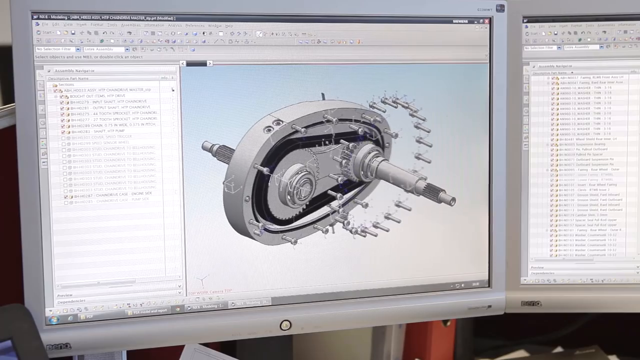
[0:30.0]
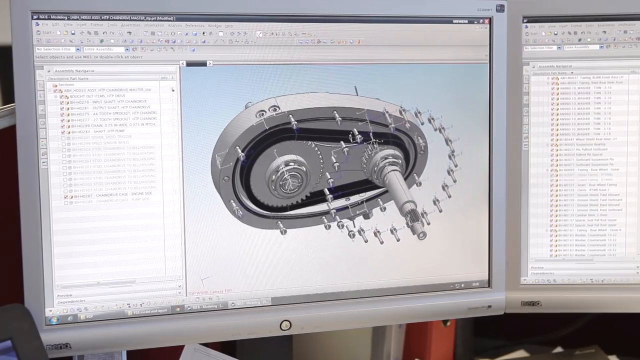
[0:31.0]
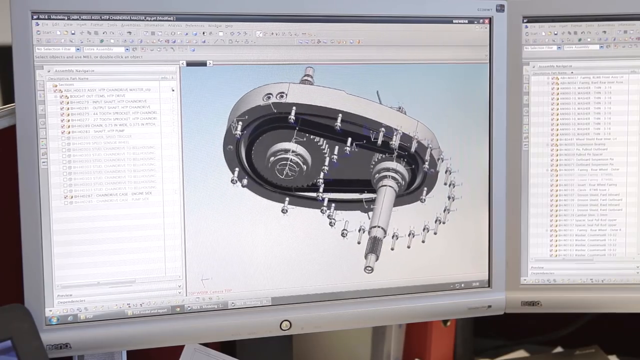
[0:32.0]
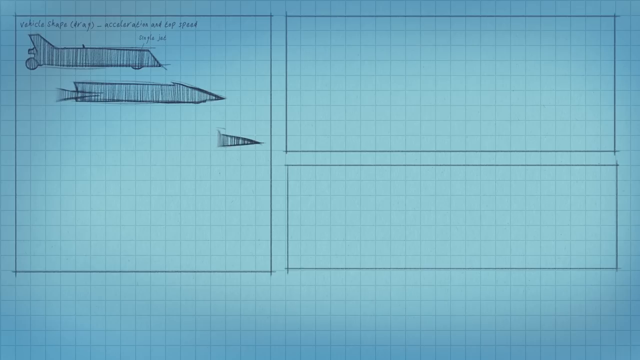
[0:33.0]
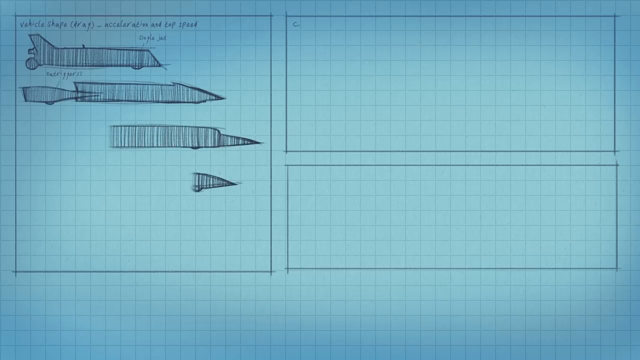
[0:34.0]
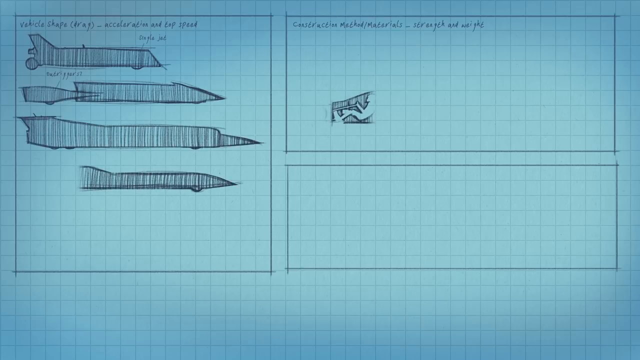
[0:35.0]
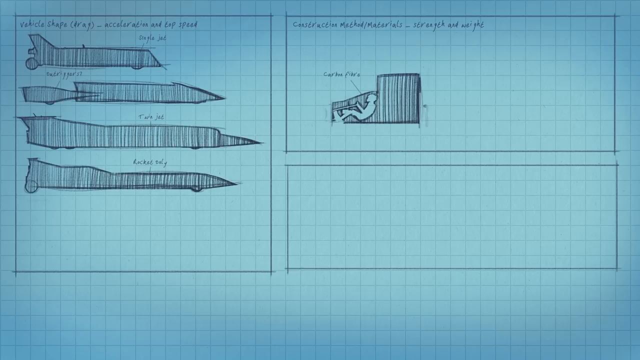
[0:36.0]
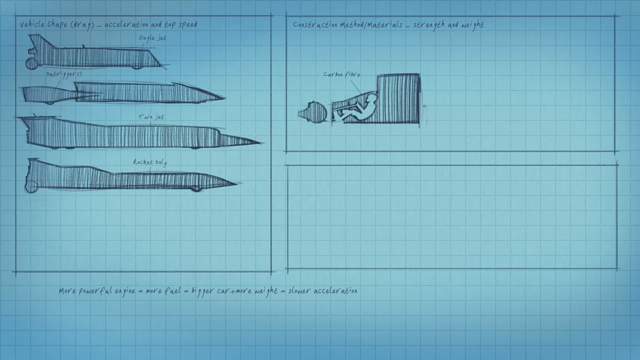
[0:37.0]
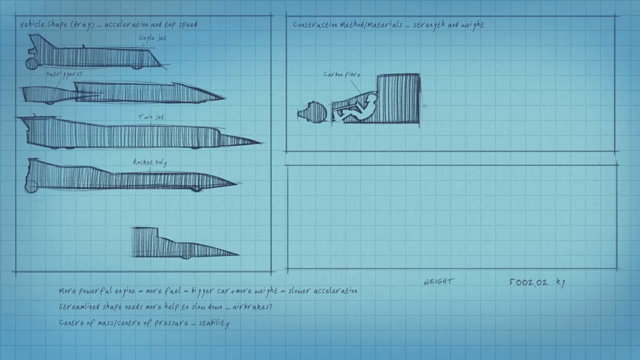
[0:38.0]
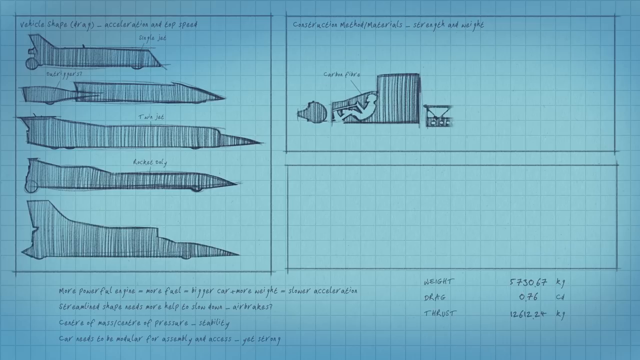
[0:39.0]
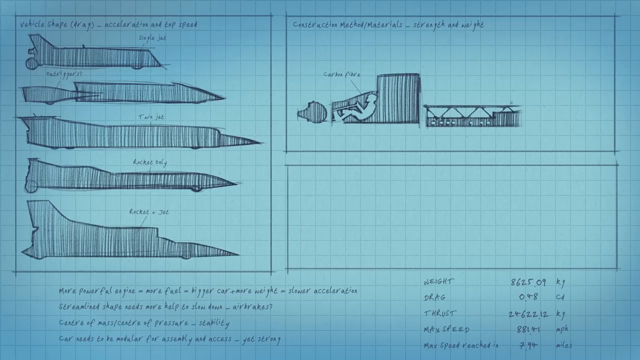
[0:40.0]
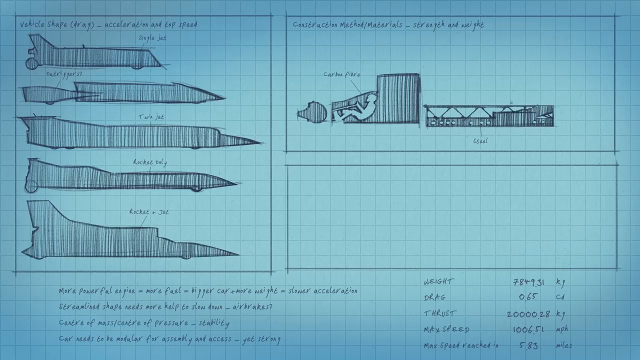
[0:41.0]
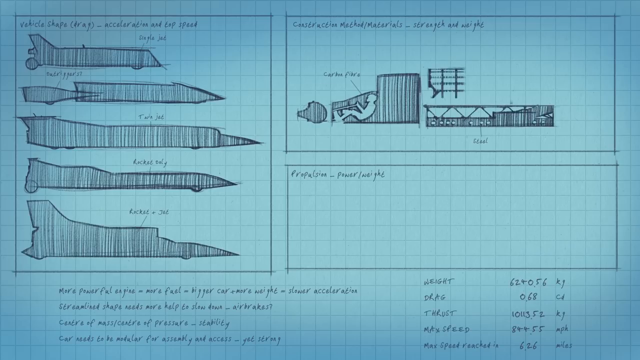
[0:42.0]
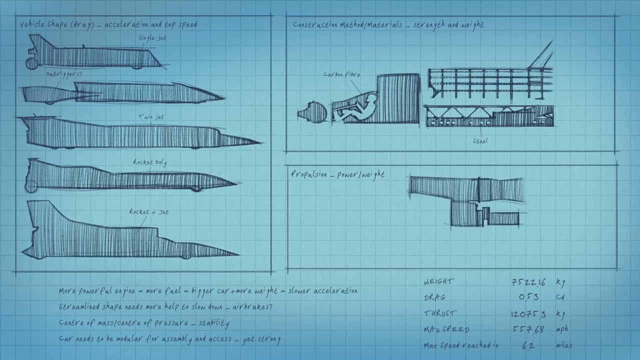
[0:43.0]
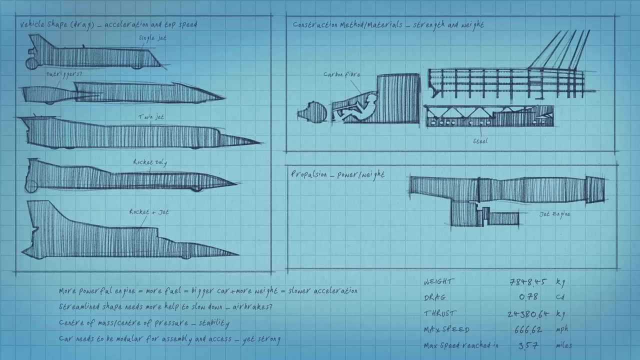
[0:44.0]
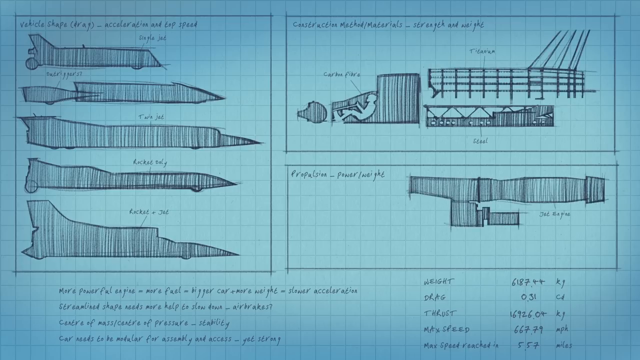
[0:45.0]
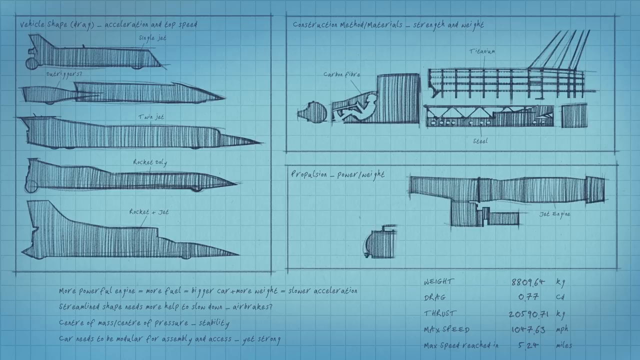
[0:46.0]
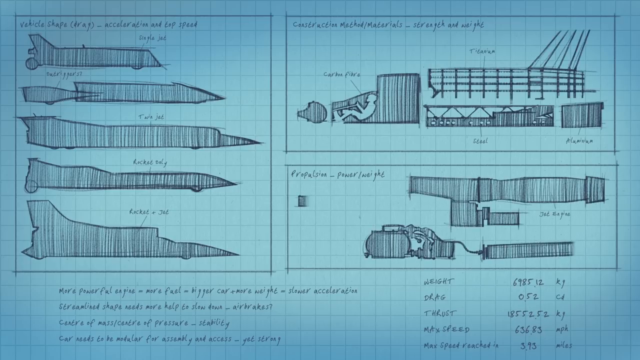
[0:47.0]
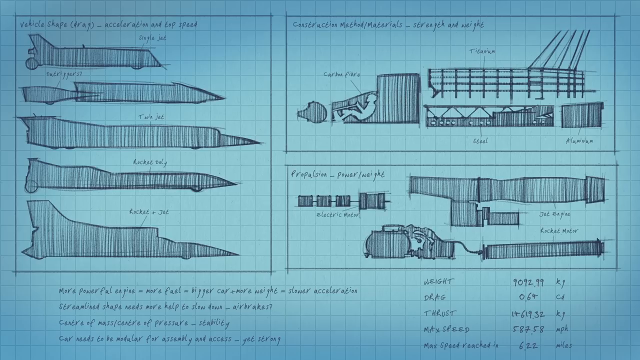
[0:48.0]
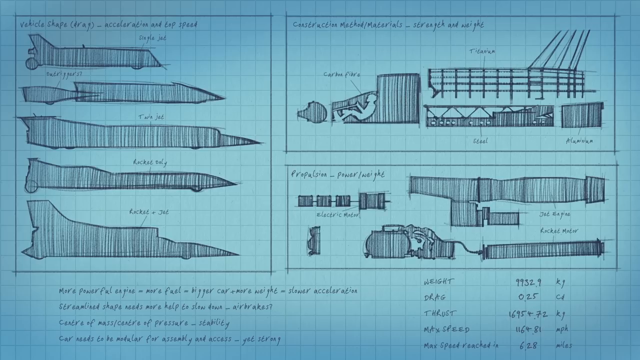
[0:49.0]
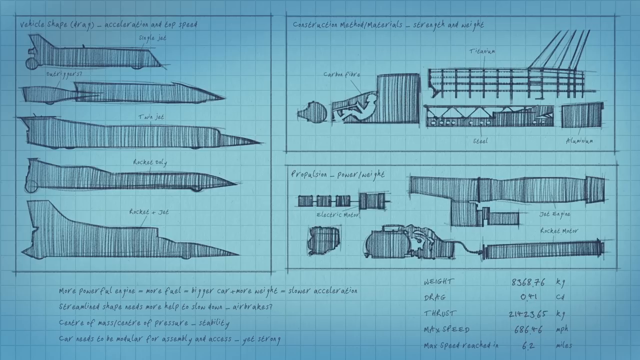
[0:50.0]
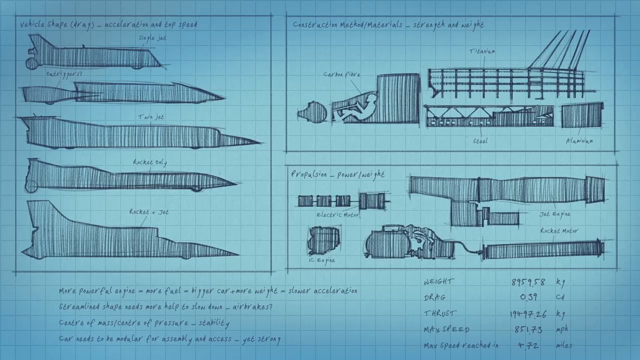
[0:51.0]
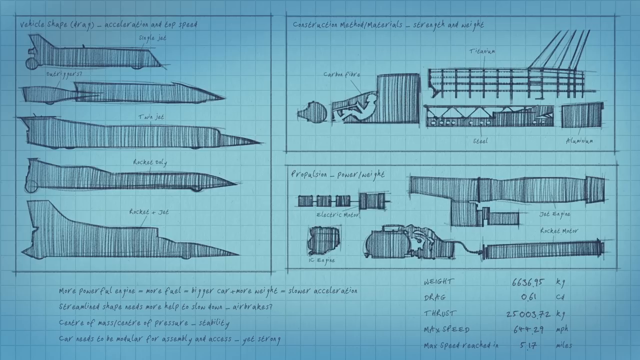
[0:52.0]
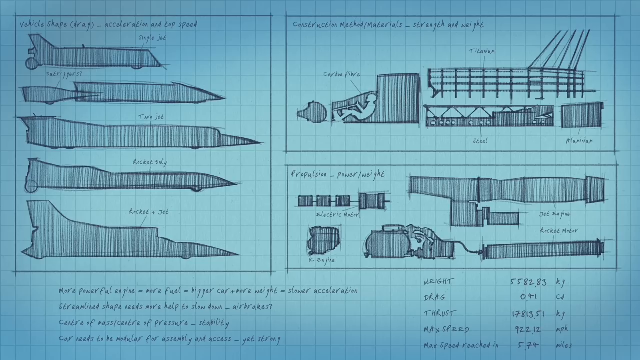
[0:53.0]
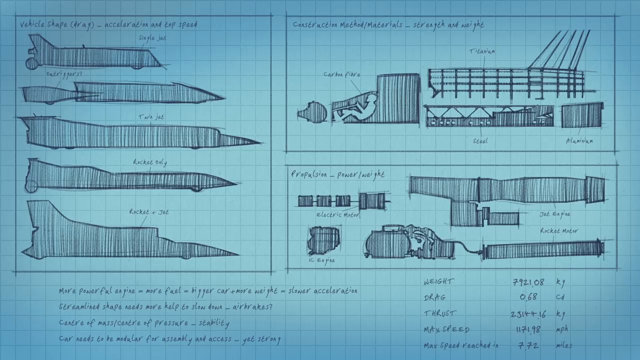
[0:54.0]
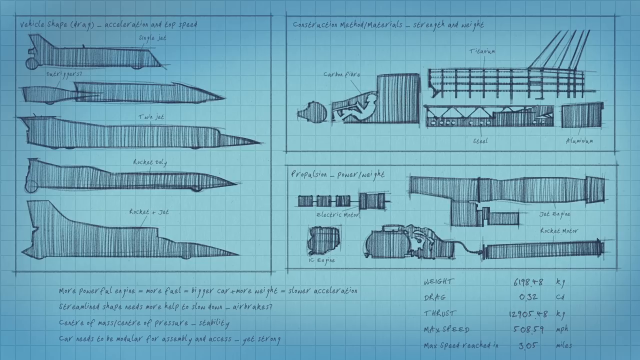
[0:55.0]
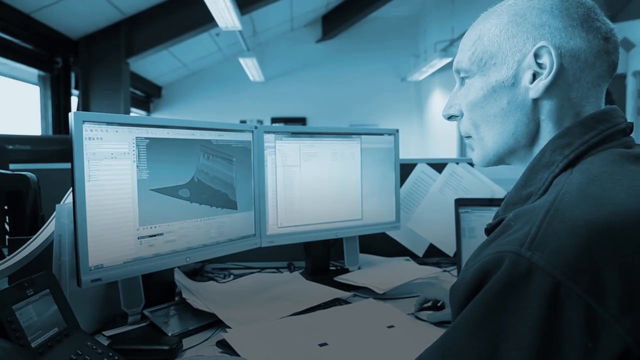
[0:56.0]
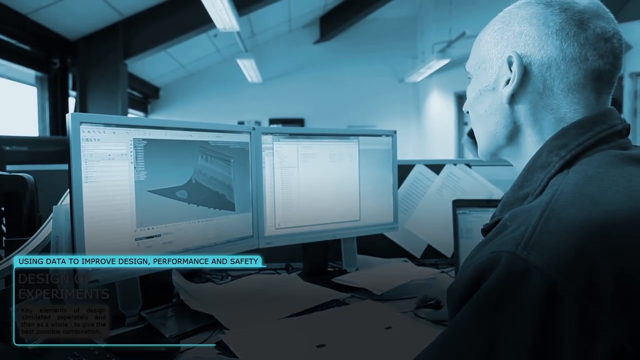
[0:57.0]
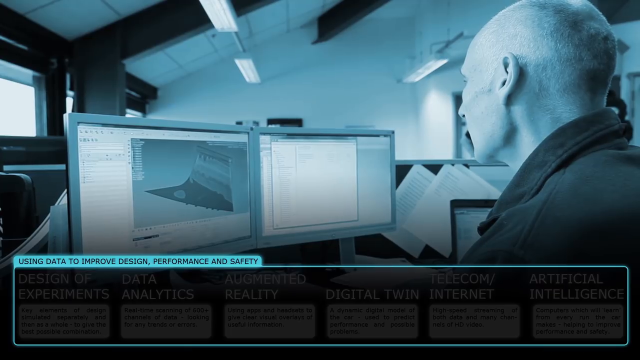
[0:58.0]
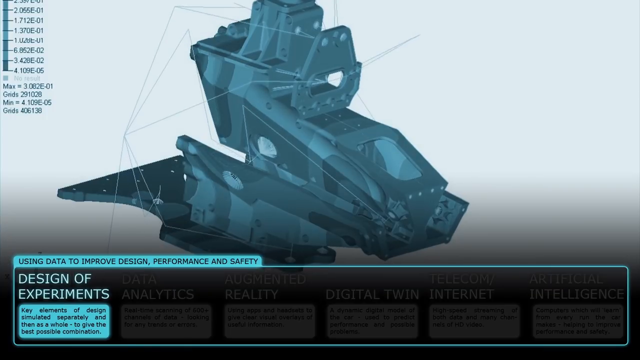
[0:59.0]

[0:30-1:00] A 3D model rotates on the left monitor of a dual-monitor setup, with another monitor on the right. The model is a gear shaft rotating slowly clockwise, angled downward toward the viewer, with what look like screws coming off it as it turns. The scene cuts to blue graph paper with three boxes drawn on it. On the left it reads "vehicle shape," "acceleration" and "cap speed," and hand-drawn images of the rocket car appear from top to bottom, getting longer further down. In the top right, "construction," "mechanical" and "materials" are drawn, along with different components of the rocket car split up, including a stick-drawn man holding a steering wheel inside the car. In the box below that it says "propulsion, power/weight," with drawings of the car's engine and other internal components. Other handwritten words are at the bottom, and numbers on the right constantly click up. Then a bald man sits at a computer with a dual-monitor setup; he is a different man from the one seen earlier.